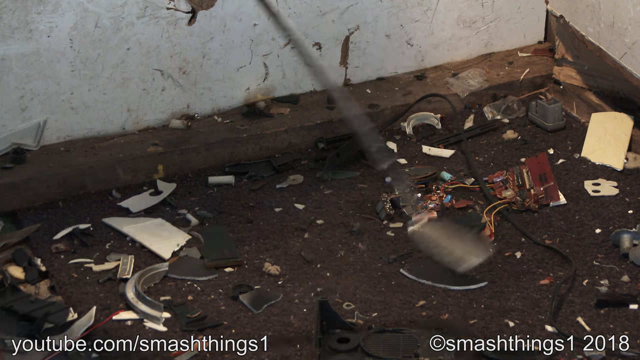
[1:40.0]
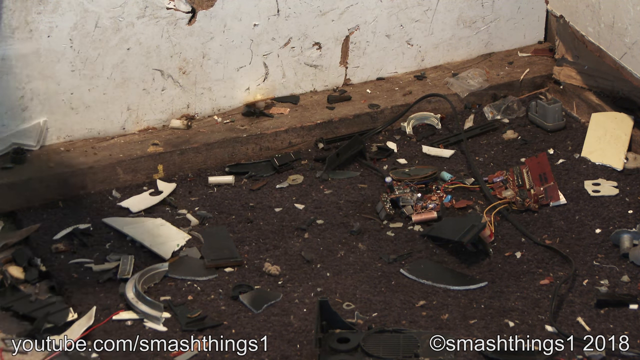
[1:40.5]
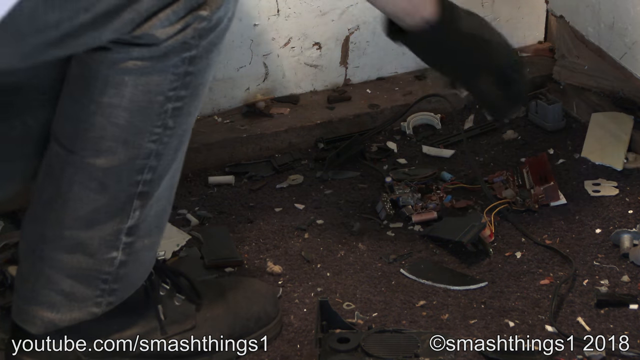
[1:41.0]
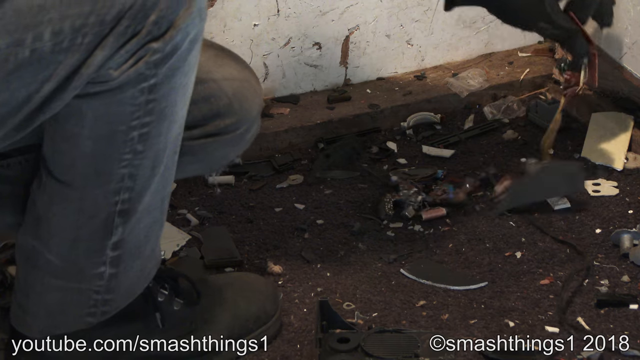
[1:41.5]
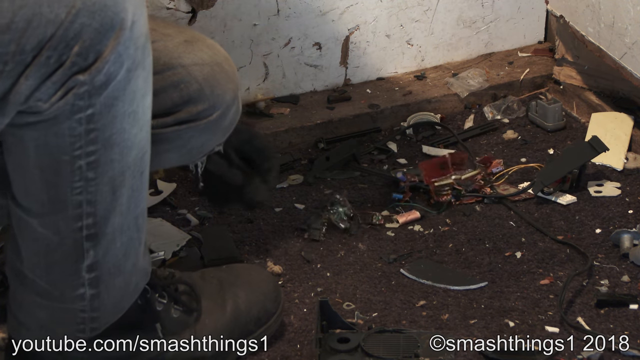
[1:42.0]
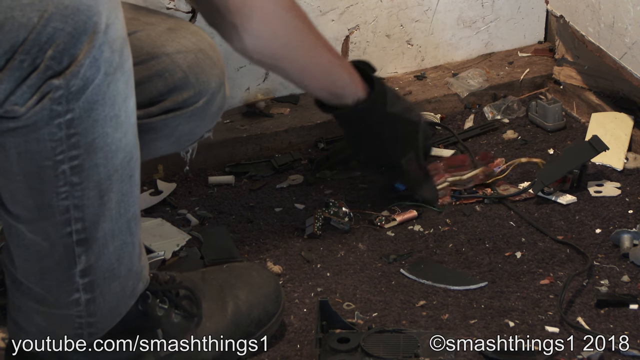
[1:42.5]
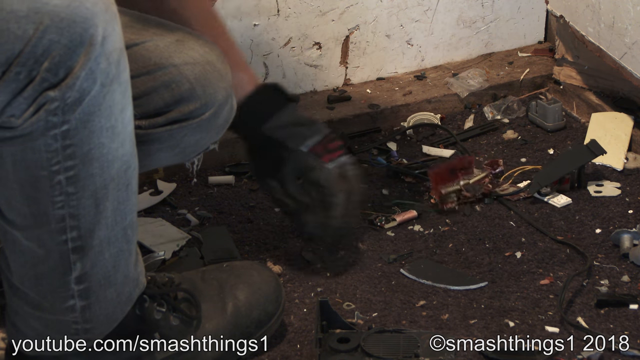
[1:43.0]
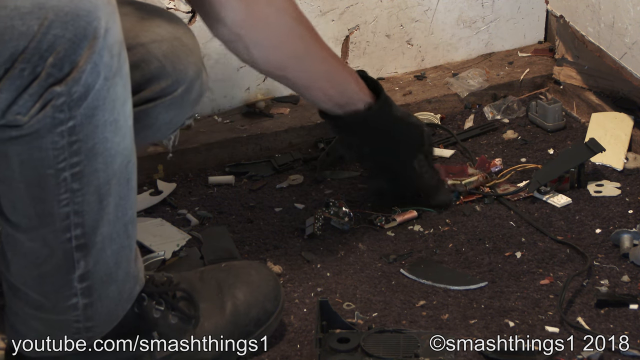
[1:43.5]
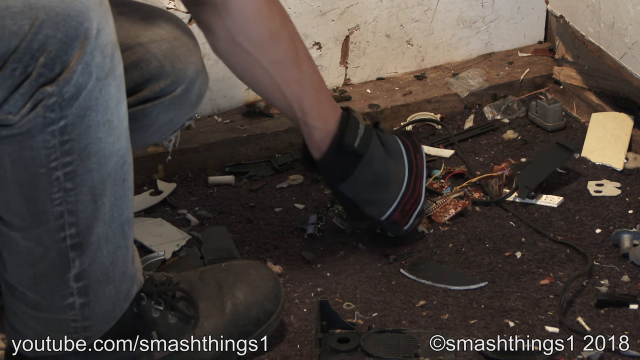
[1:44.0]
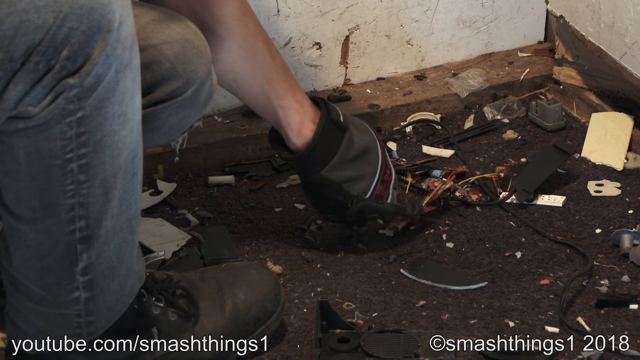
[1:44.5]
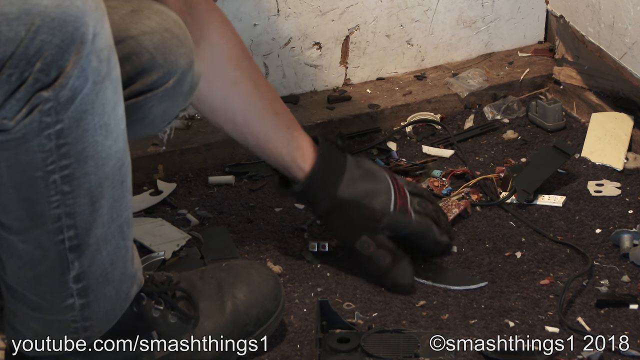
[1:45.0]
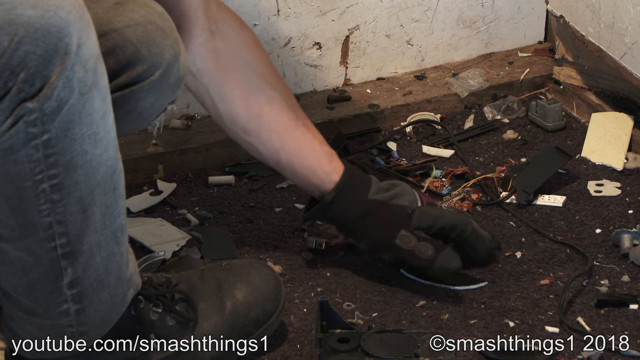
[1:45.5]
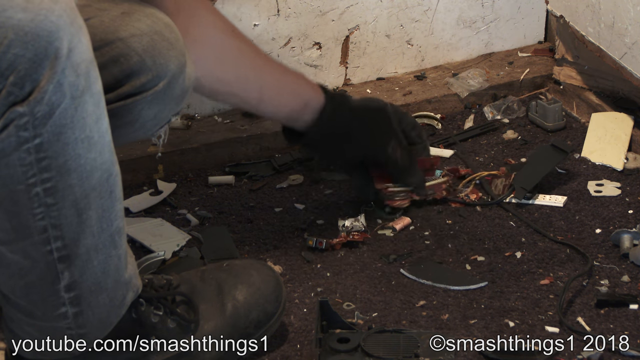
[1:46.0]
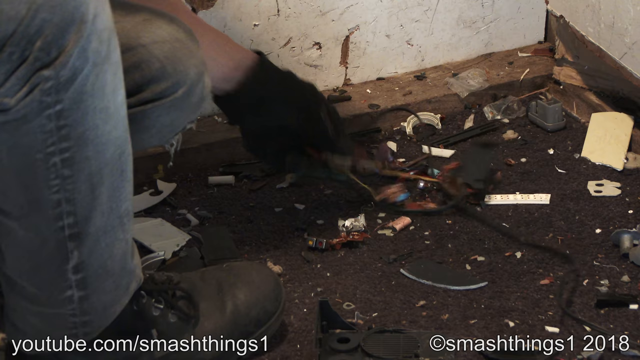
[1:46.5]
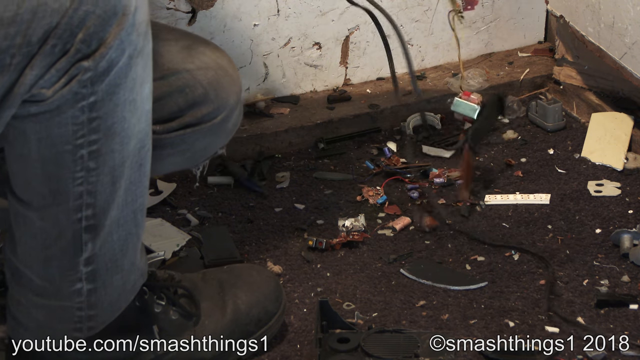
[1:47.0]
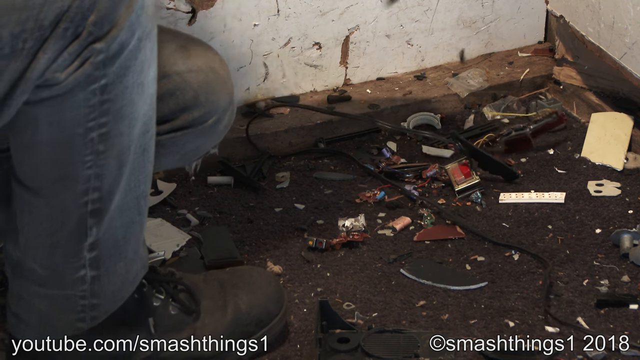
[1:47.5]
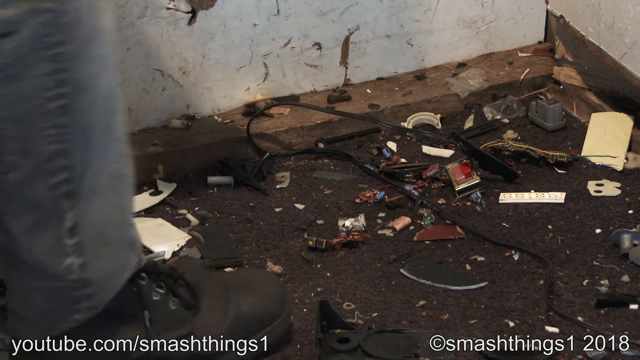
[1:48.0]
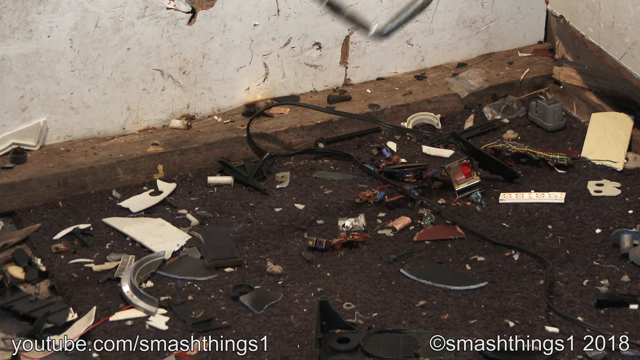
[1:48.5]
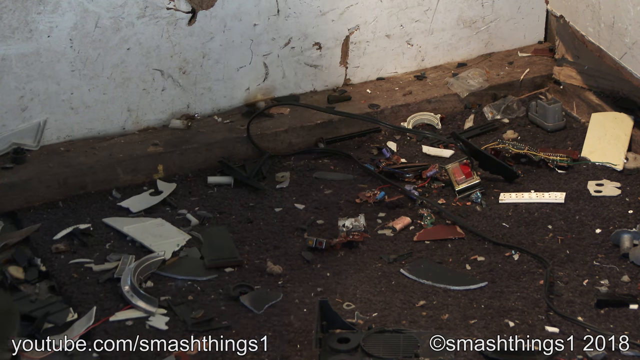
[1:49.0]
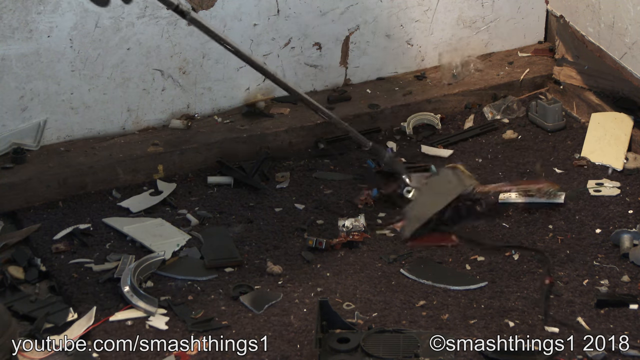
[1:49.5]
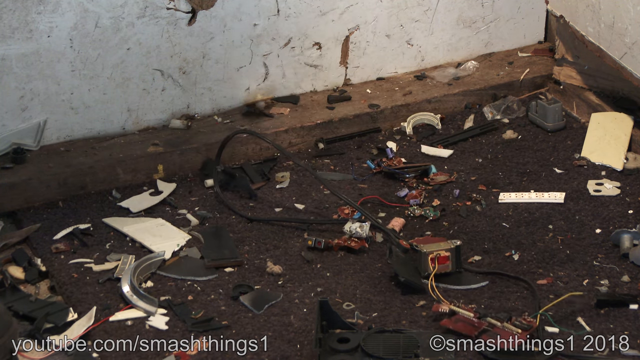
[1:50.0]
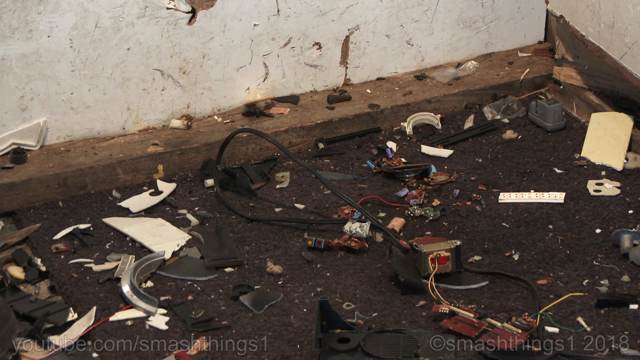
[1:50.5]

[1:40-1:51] In the smashing room, one man is visible, his body on the left side of the screen. He has picked up a golf club and uses it as a tool to bang up previously broken items. His left hand reaches down and starts pulling apart a previously broken clock.